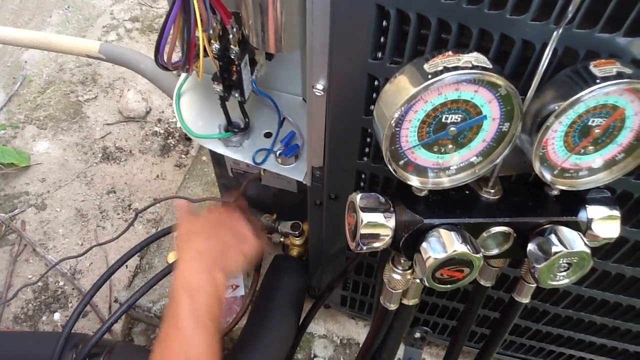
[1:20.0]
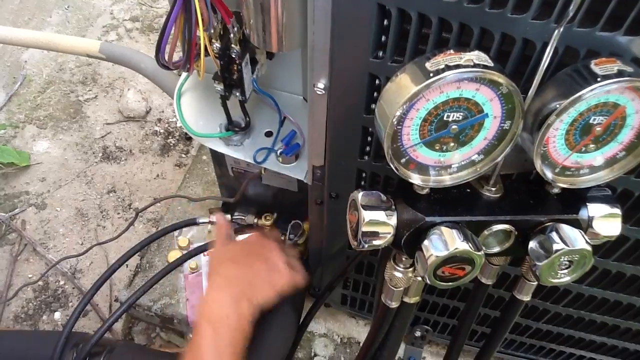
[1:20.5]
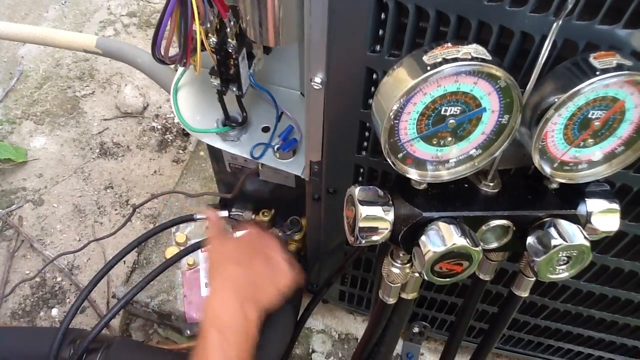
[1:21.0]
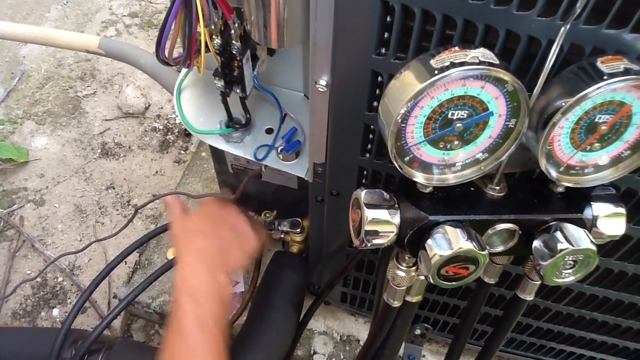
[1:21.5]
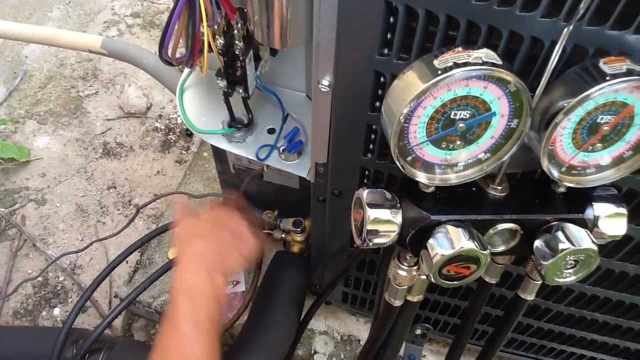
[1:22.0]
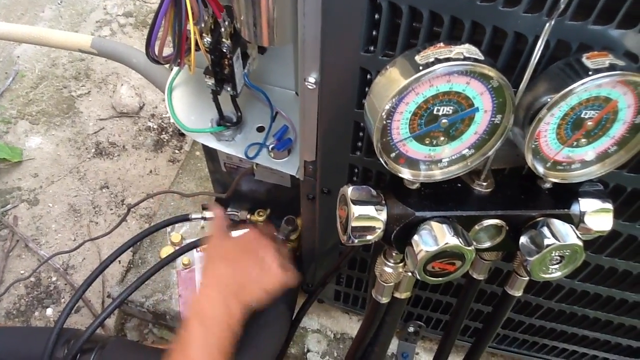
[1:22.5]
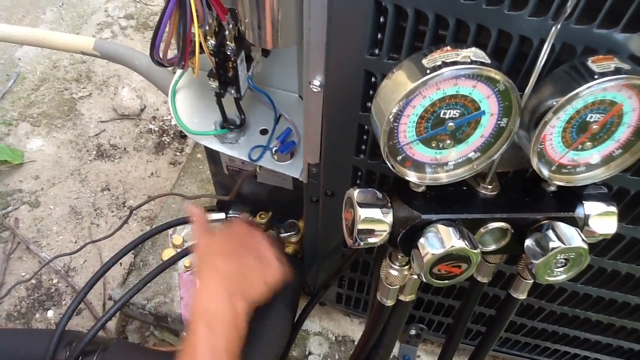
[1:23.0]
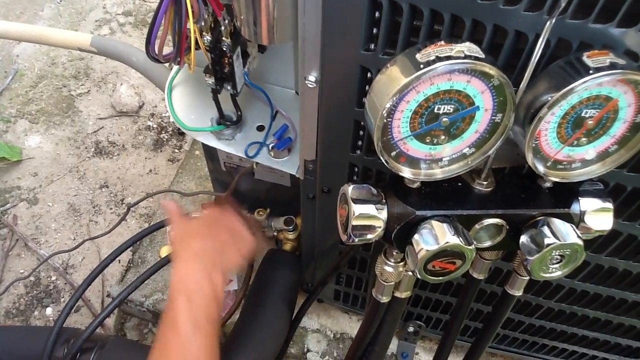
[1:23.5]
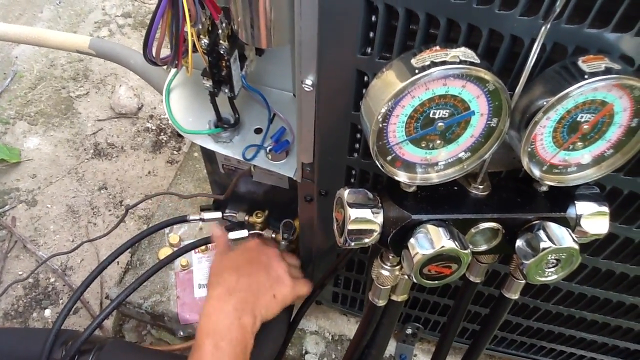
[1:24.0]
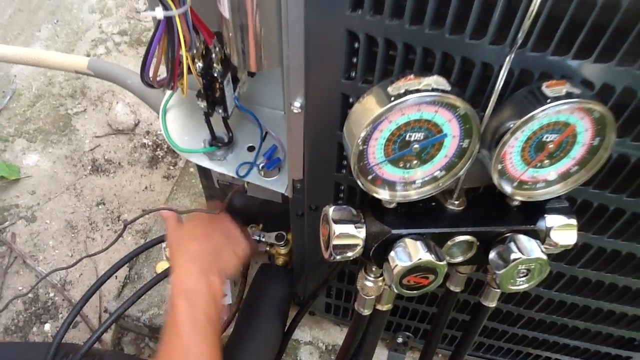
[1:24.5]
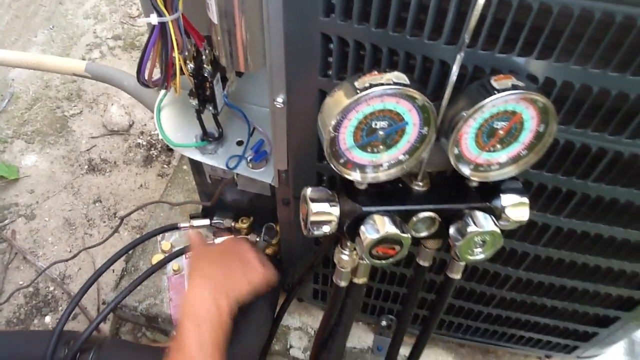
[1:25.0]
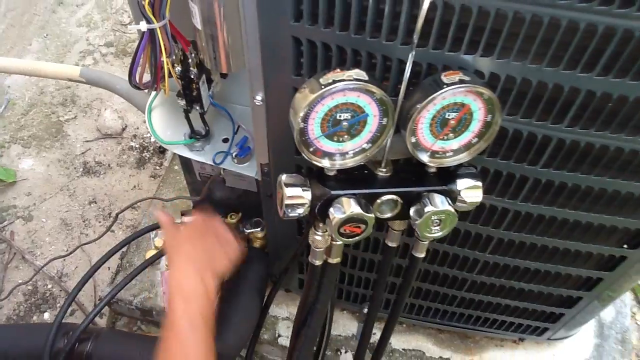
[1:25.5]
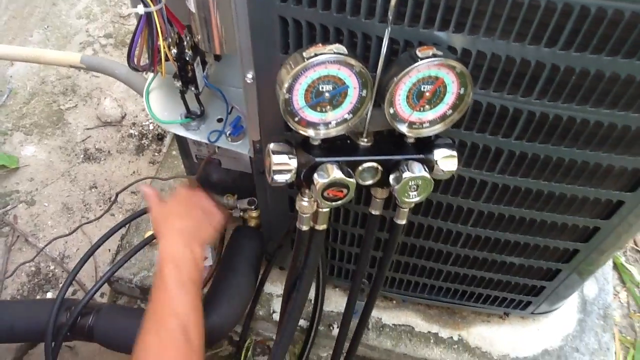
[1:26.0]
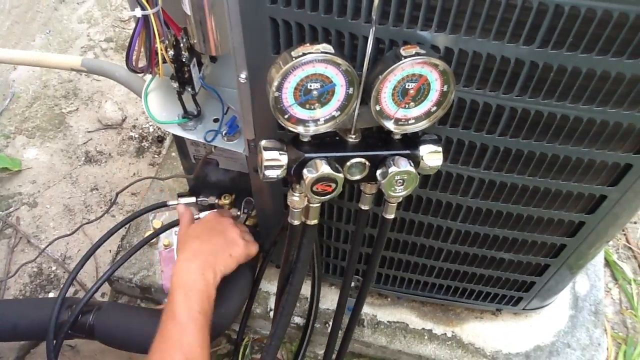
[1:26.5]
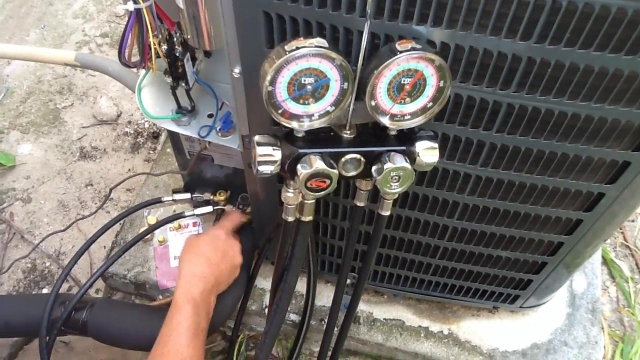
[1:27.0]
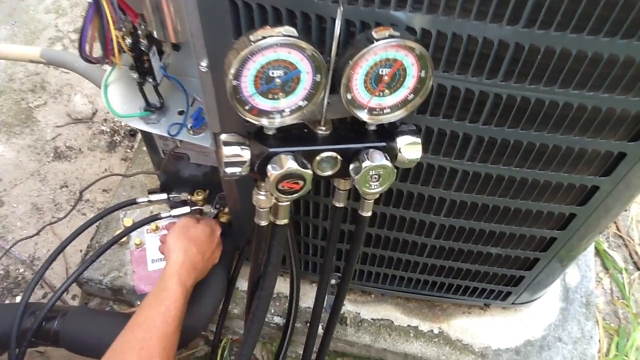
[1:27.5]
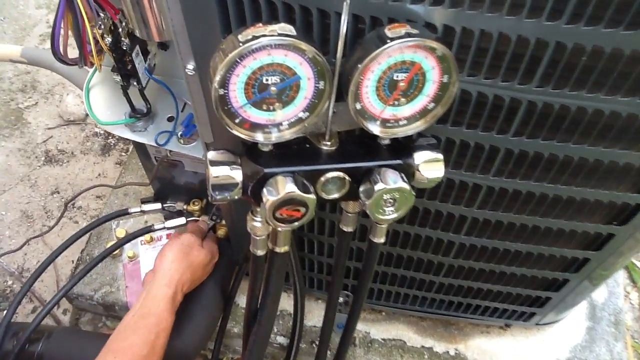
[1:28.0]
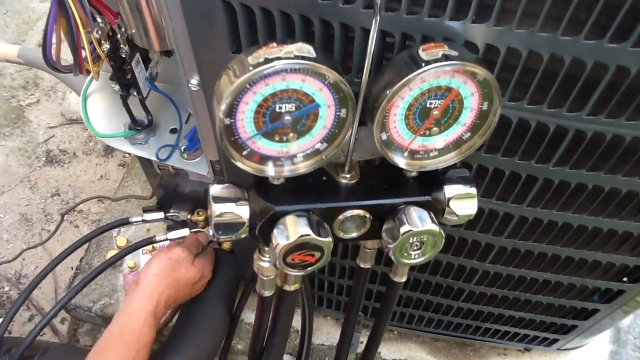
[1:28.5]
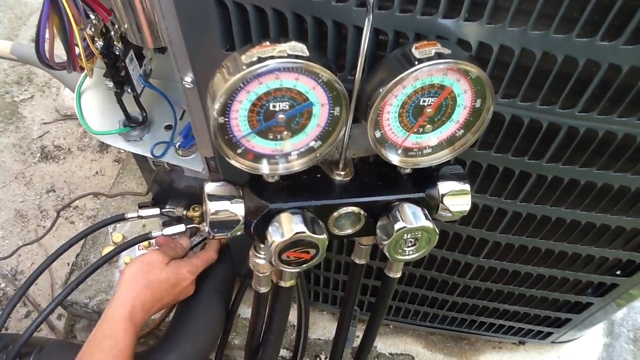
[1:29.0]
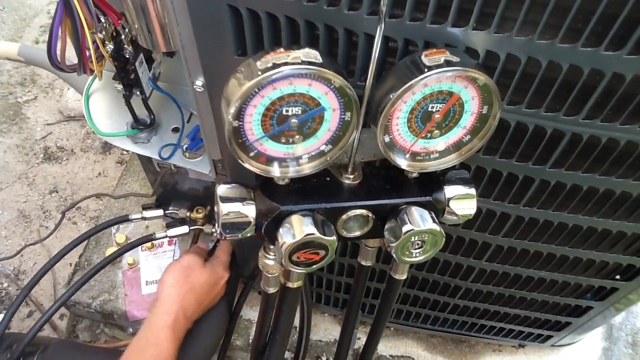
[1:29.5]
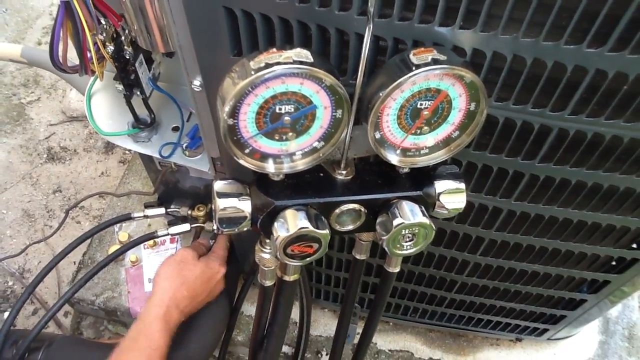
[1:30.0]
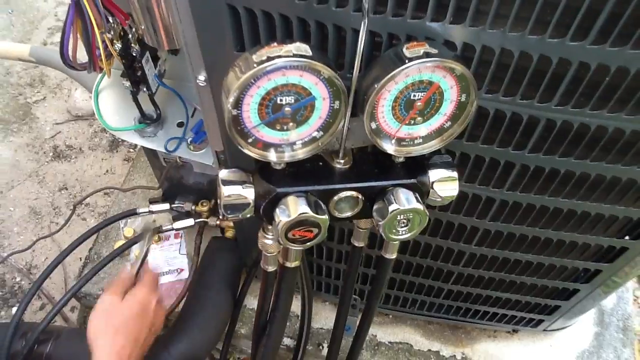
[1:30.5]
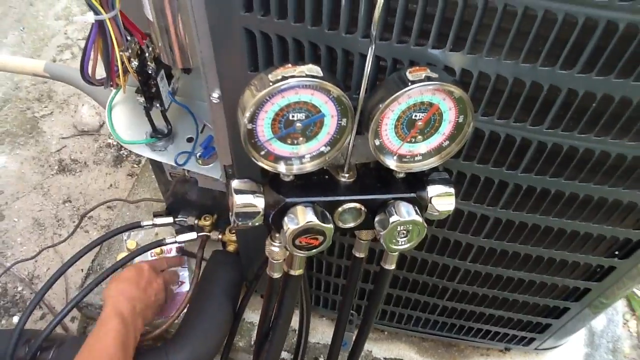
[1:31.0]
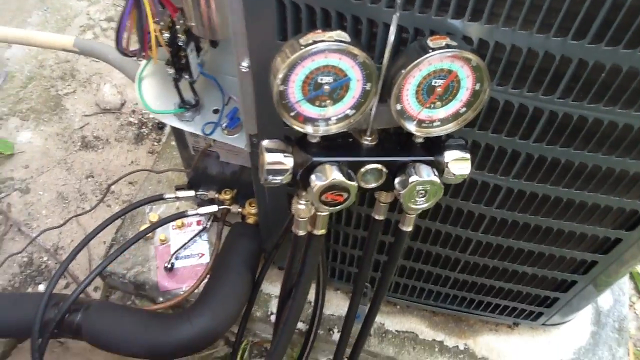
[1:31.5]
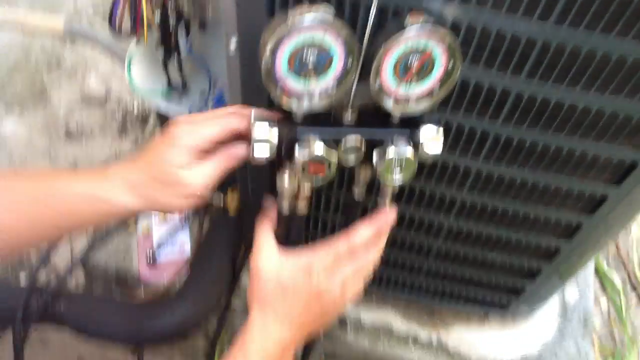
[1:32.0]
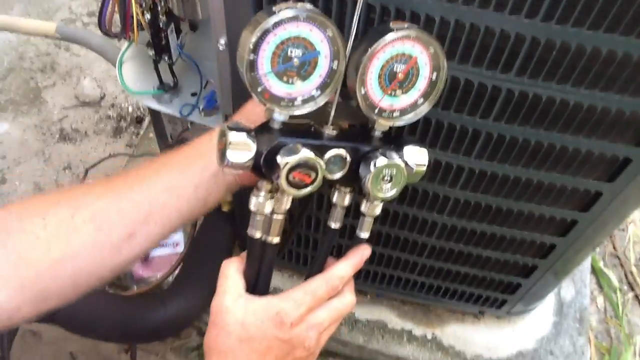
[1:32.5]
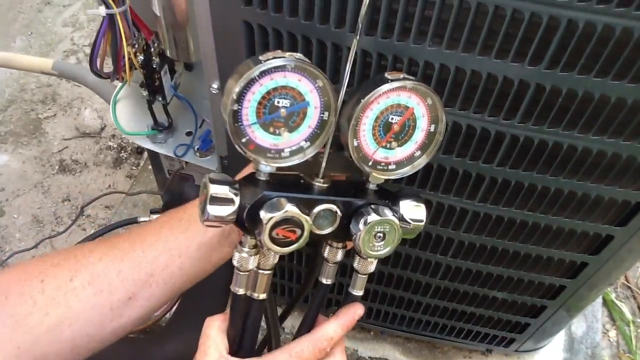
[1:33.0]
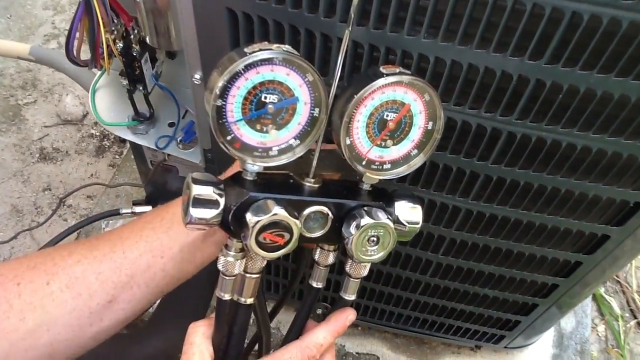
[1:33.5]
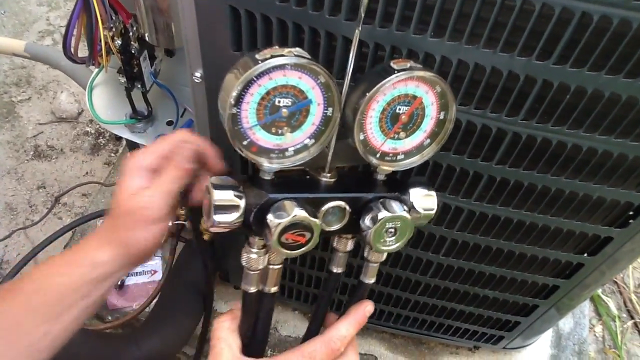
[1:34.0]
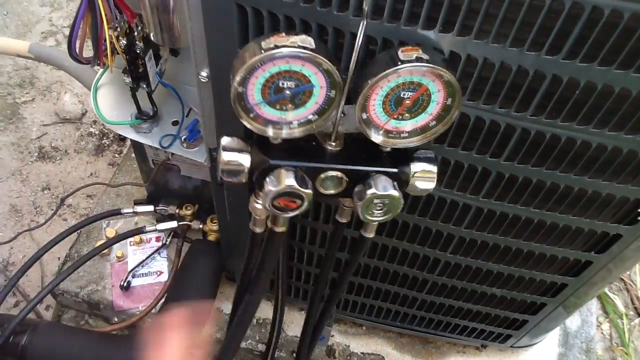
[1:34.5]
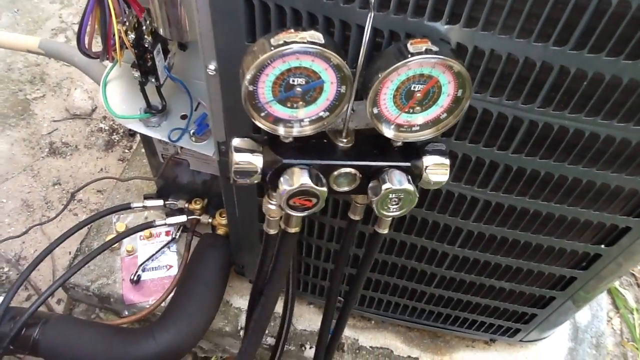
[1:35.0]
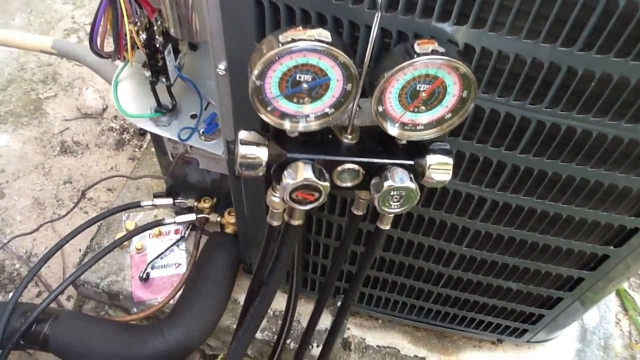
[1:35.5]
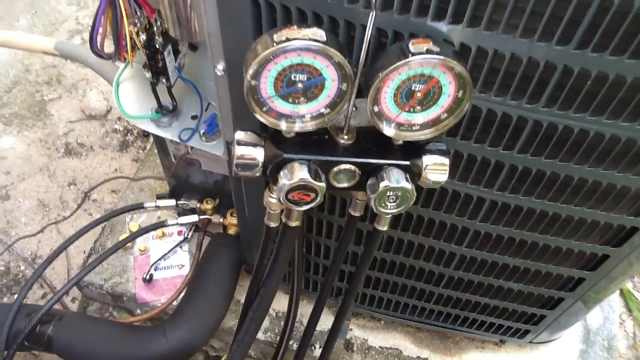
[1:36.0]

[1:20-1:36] A man apparently has tightened a screw on the side of an HVAC unit. The cover seems to be taken off one side, and the electrical wiring inside is visible. A gauge unit is attached to the HVAC unit by a hanger; it has two circular dials that gauge the amount being put in. He tightens or loosens screws where the pipe and wires go into the machine, then handles the gauges and unscrews things off their side. He goes back to tightening or loosening screws on the machine, and seems to be trying to take the gauge off the unit, into which he was maybe adding Freon or some sort of gas. The view cuts back to the gauges, then to his hand tightening the unit with a screwdriver, and then unscrewing a piece off the back of the gasket.